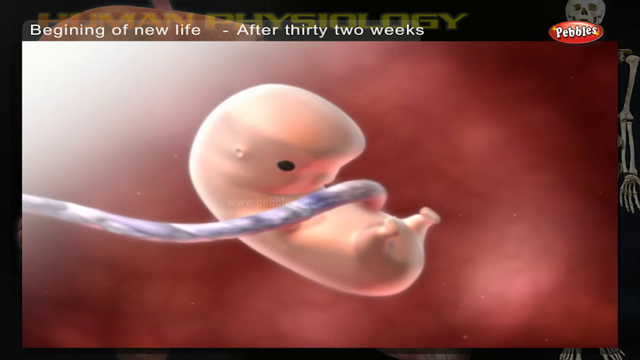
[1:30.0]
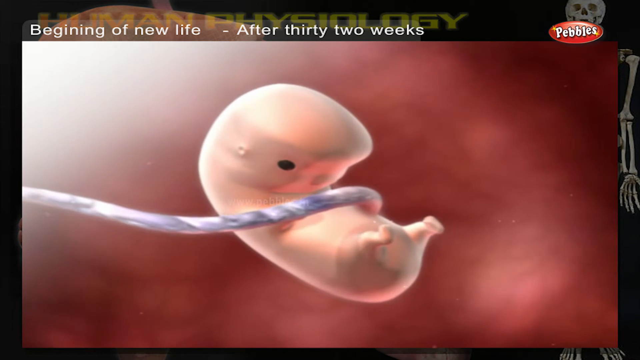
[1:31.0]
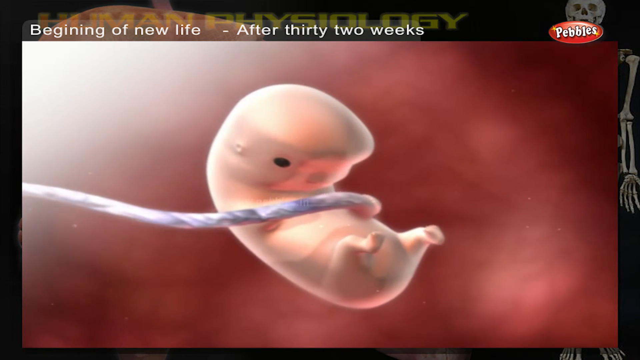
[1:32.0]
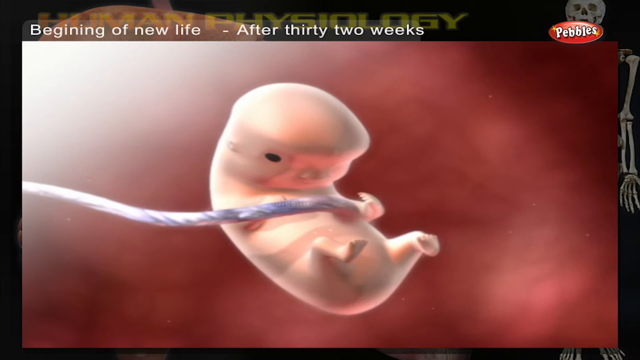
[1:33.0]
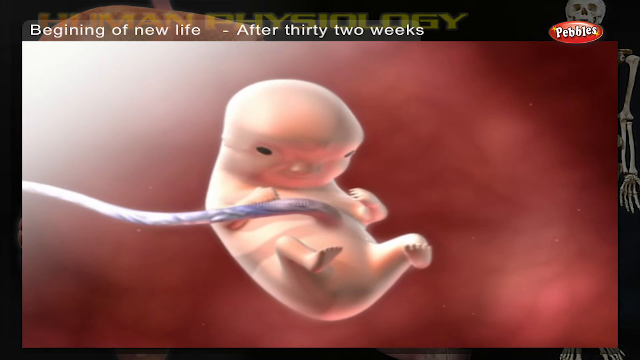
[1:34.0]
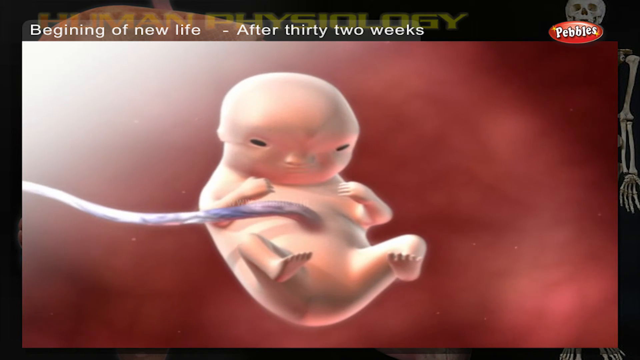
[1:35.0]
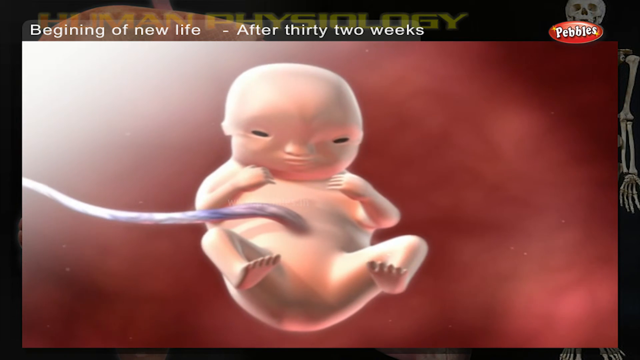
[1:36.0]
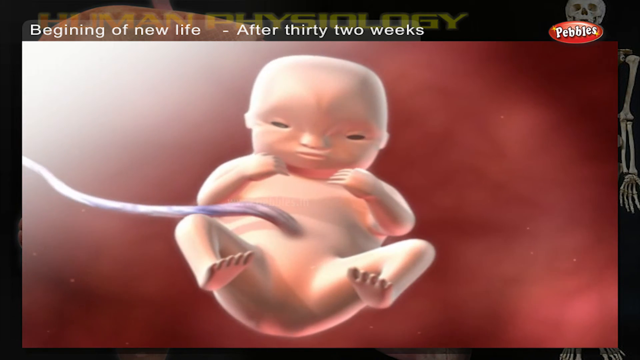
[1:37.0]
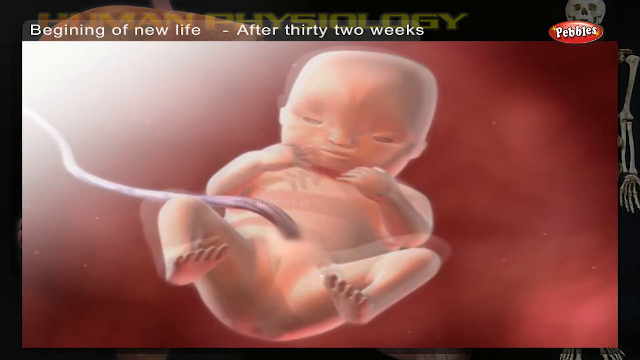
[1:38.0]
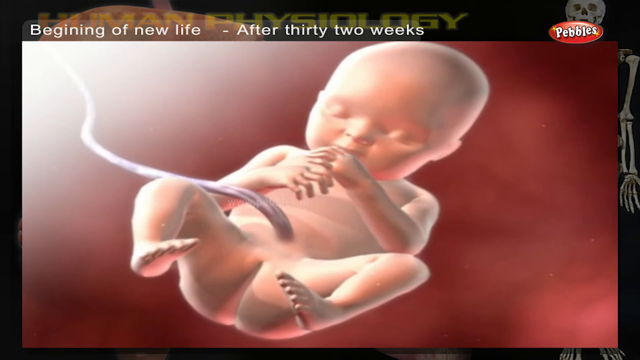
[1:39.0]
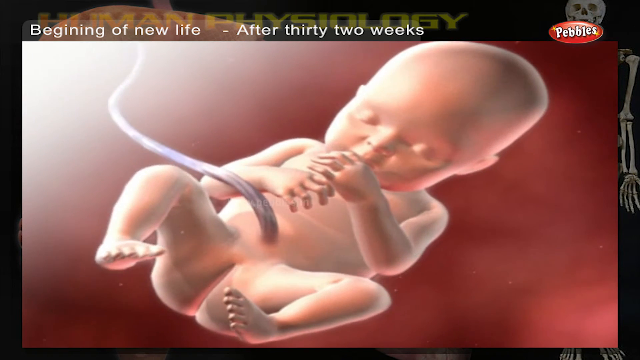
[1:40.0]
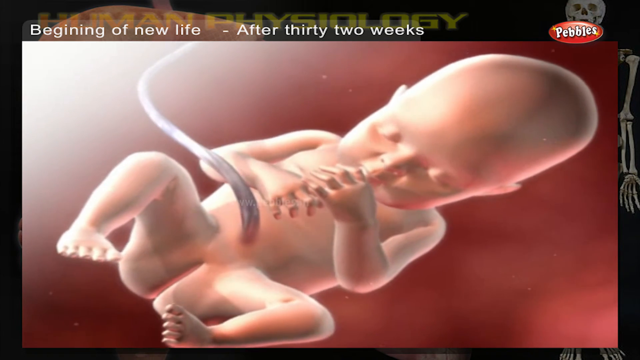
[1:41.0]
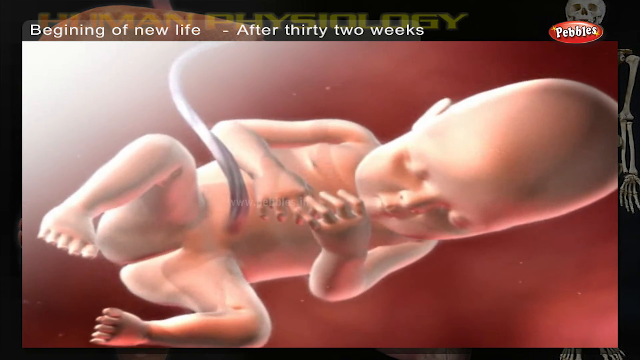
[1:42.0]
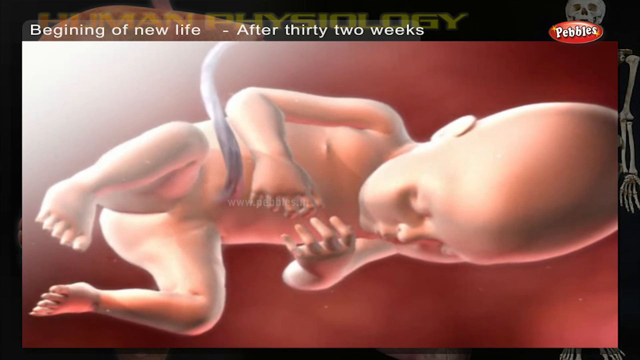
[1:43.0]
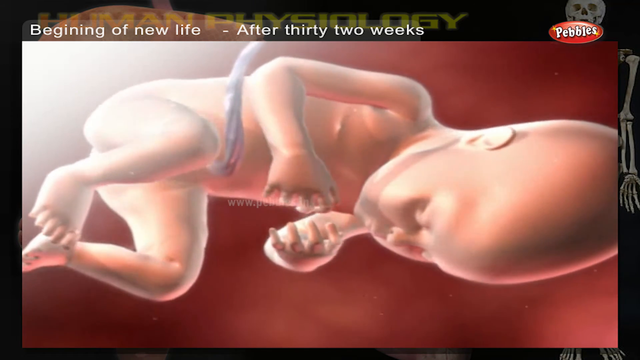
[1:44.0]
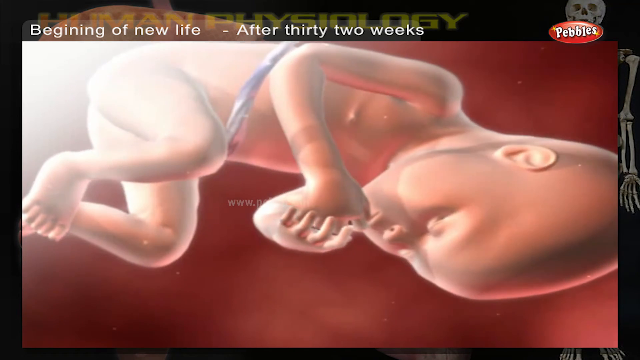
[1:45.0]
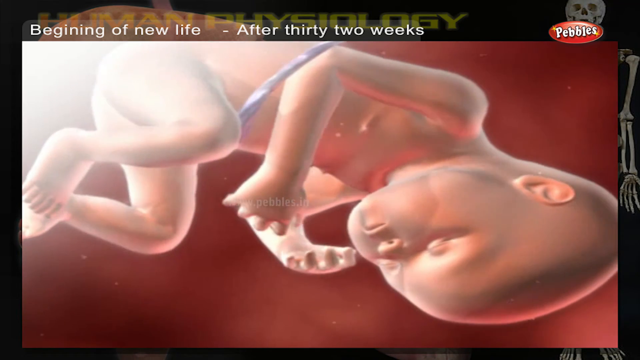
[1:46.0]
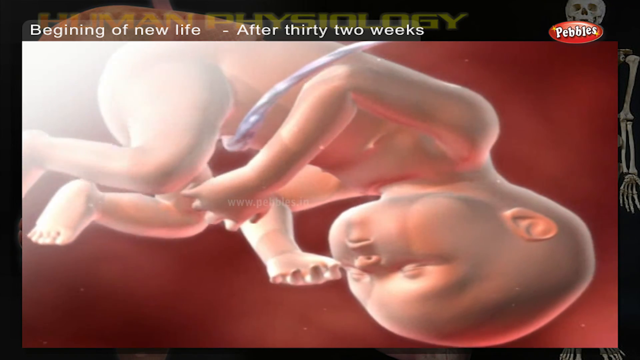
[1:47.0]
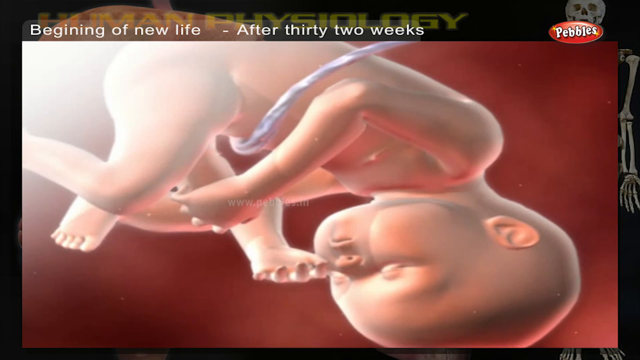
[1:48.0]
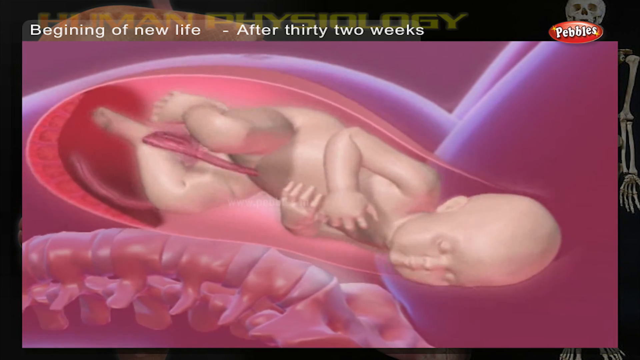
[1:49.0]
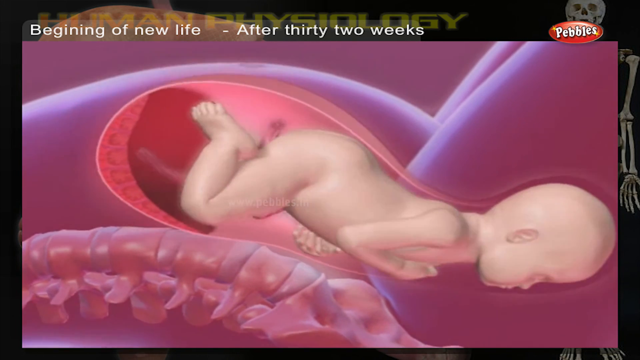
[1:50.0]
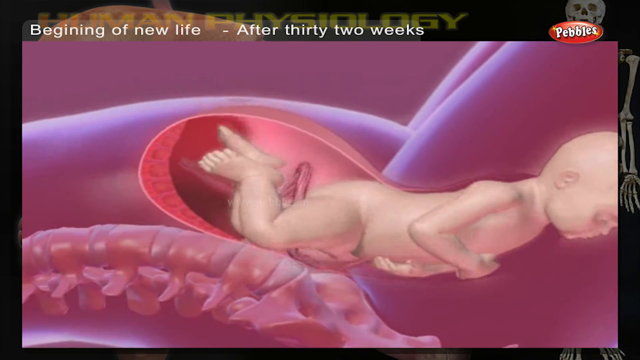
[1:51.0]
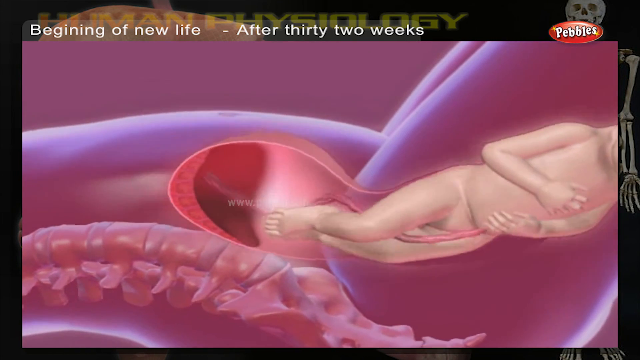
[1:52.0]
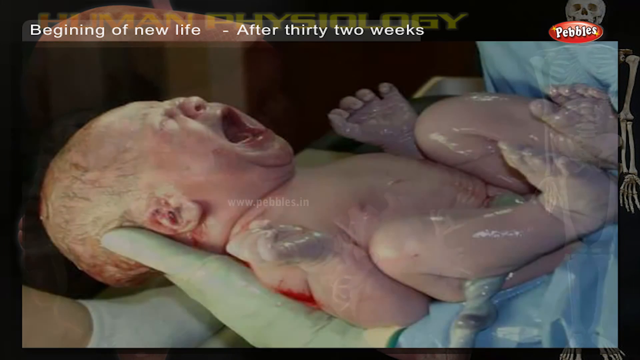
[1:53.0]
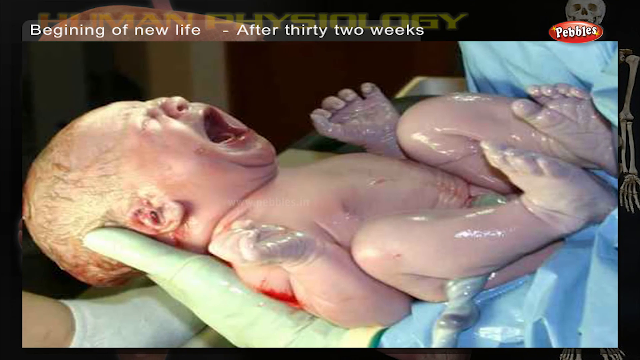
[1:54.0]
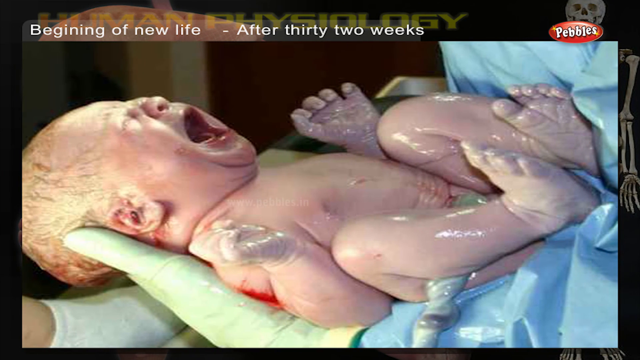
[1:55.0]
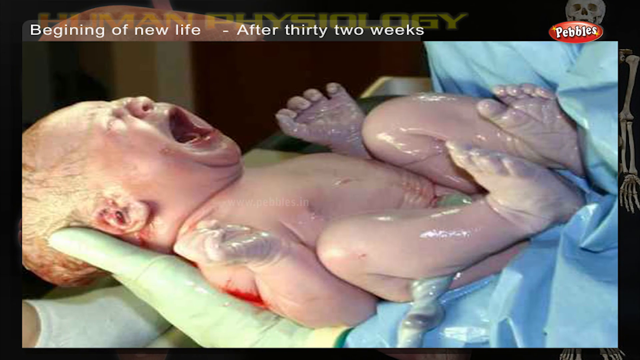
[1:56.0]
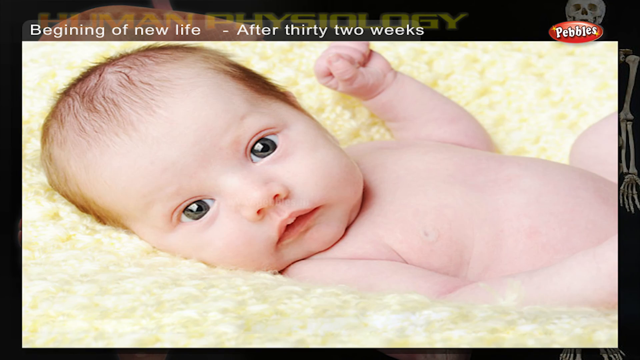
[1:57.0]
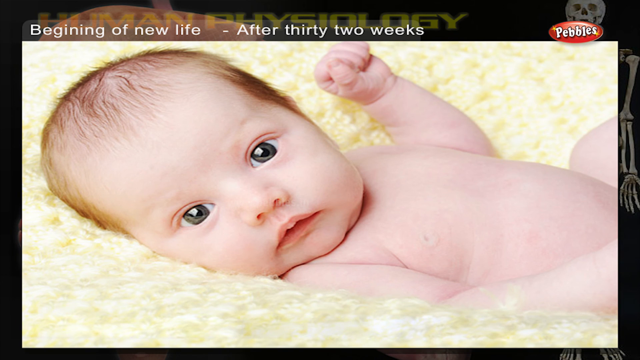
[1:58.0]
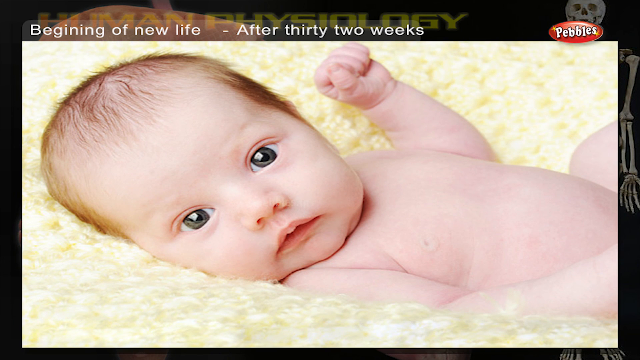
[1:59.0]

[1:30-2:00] The footage shows what appears to be the fetus from day one to after 32 weeks or up to 10 months, slowly changing and growing bigger as the shape forms into a baby. The legs, hands and head form, the head slowly shaping into a normal baby head, and the umbilical cord forms on the baby. The fingers, toes, ears and eyes form and become clear. The baby turns as the pregnancy progresses, then is seen inside the body slowly moving, and then coming out of the mom during birth, head first and facing down. The video cuts to a crying baby, seemingly a picture taken right after birth, then to a picture of a baby looking at the camera.